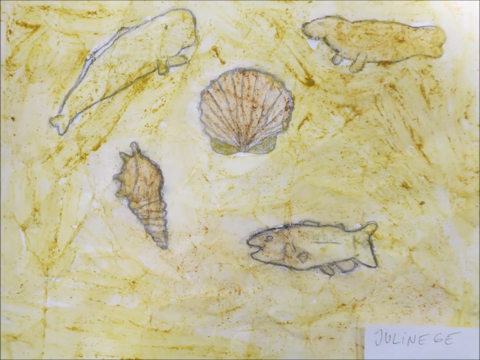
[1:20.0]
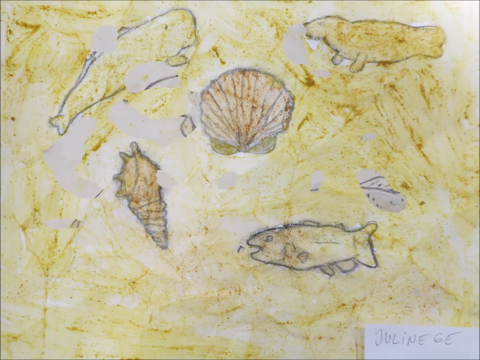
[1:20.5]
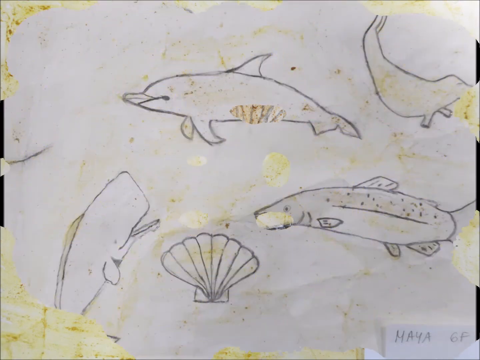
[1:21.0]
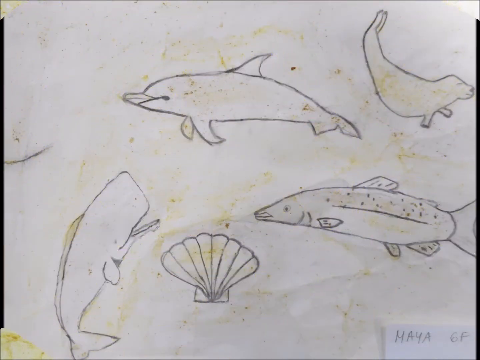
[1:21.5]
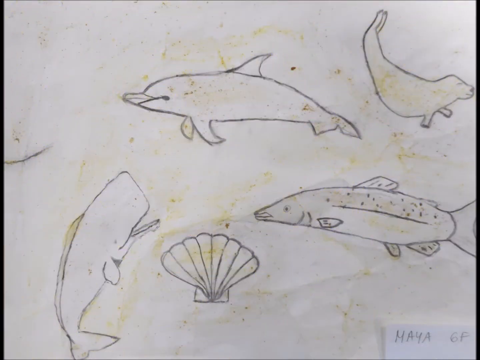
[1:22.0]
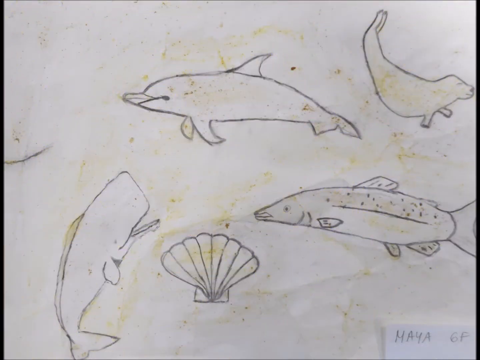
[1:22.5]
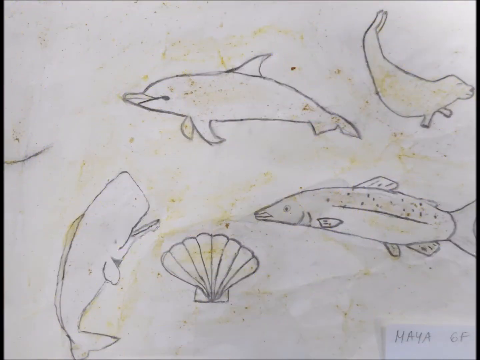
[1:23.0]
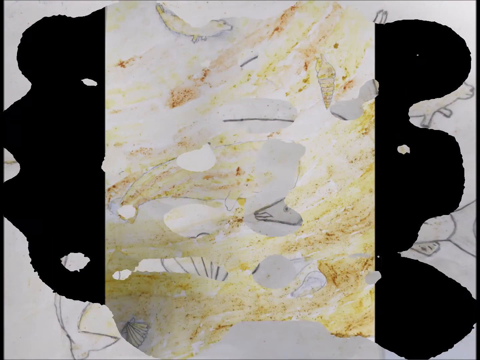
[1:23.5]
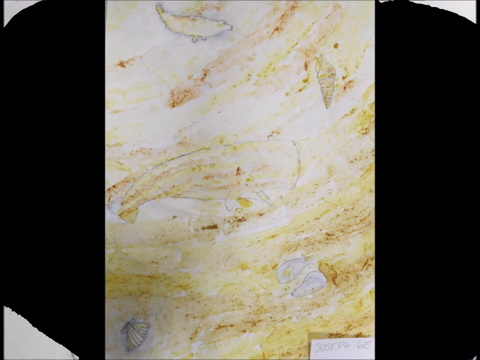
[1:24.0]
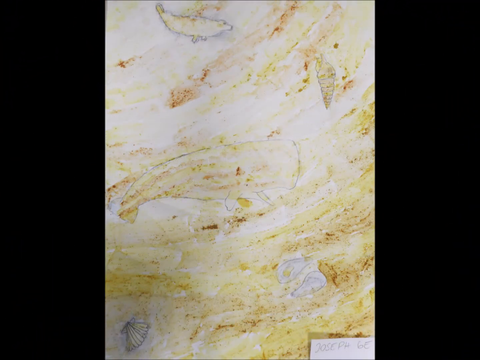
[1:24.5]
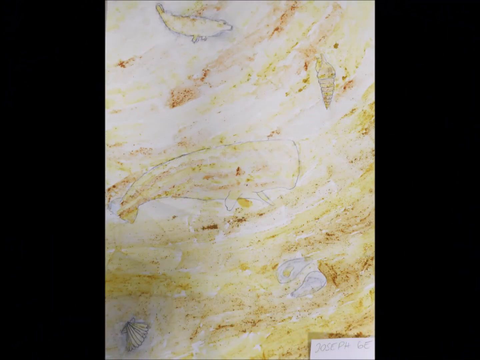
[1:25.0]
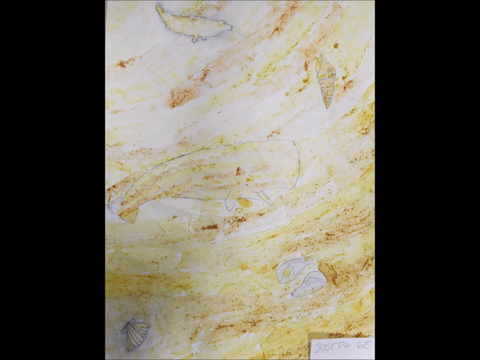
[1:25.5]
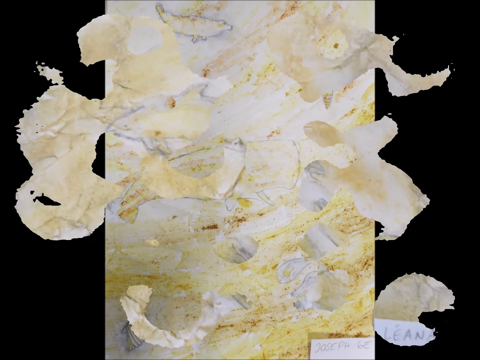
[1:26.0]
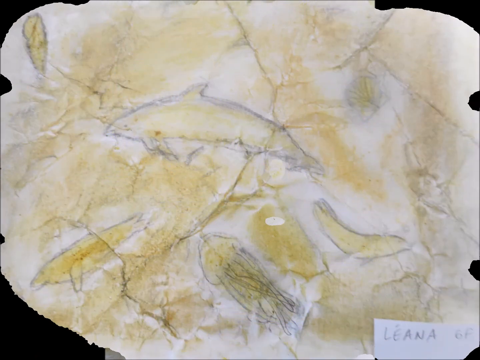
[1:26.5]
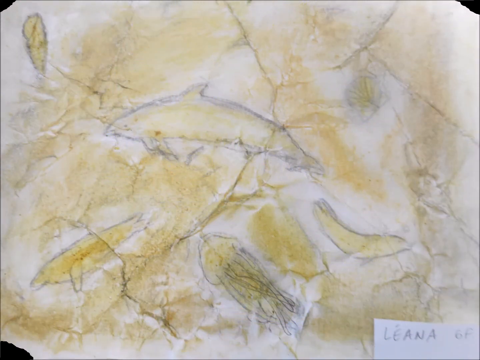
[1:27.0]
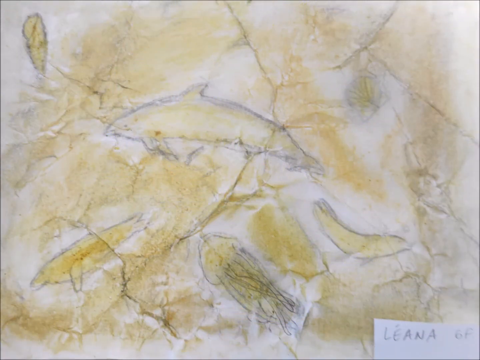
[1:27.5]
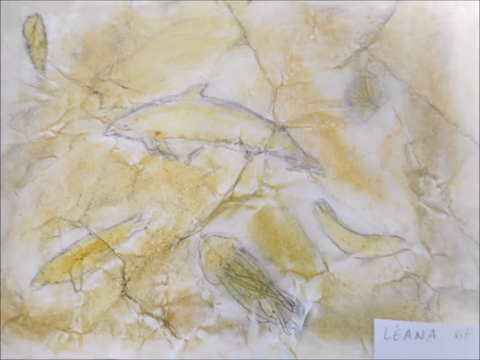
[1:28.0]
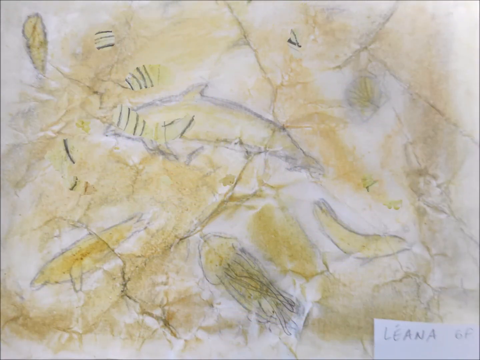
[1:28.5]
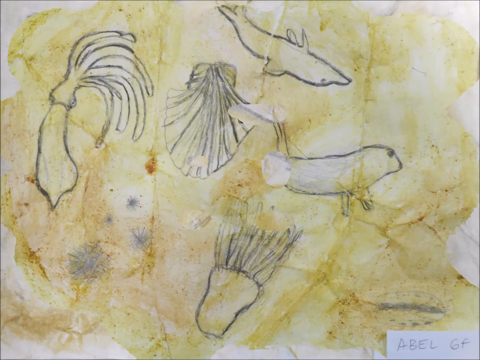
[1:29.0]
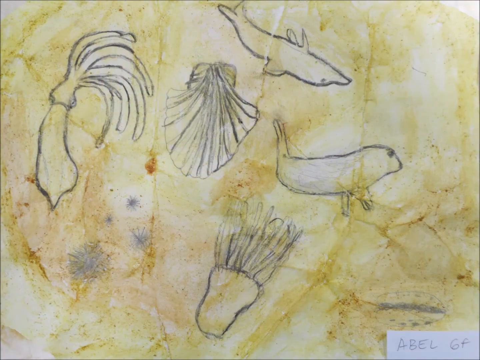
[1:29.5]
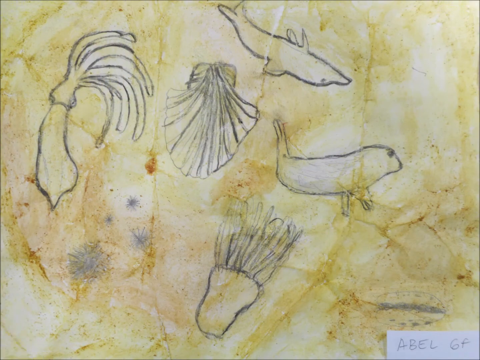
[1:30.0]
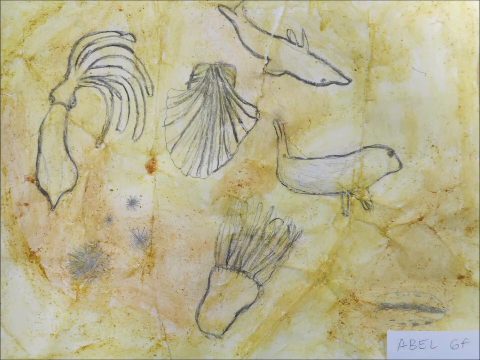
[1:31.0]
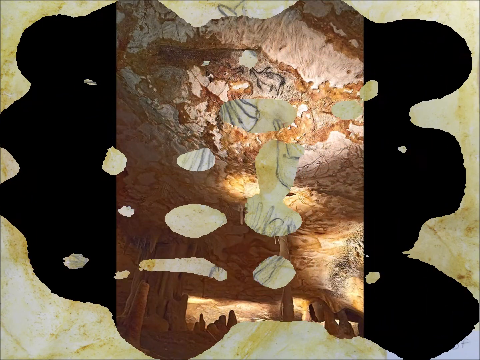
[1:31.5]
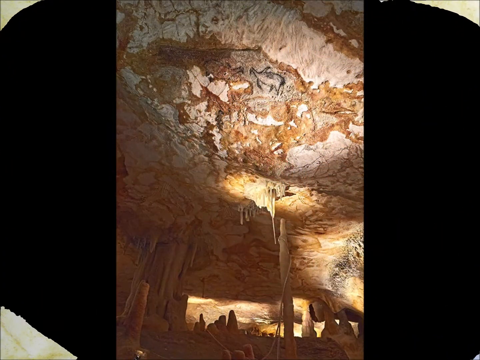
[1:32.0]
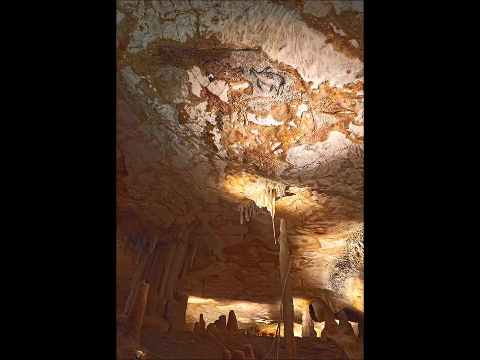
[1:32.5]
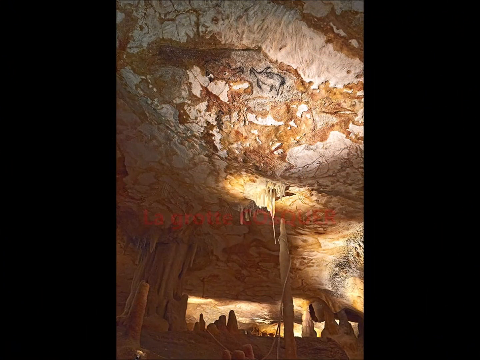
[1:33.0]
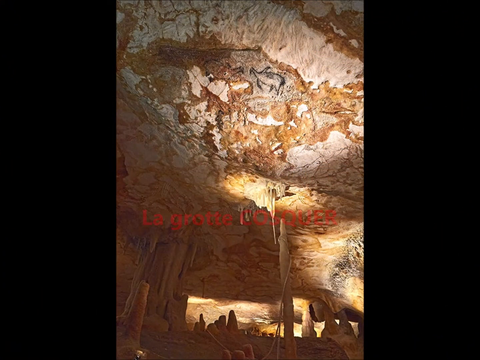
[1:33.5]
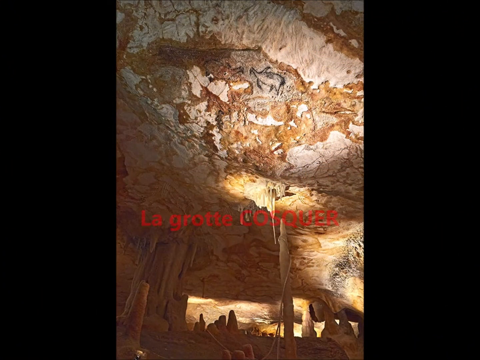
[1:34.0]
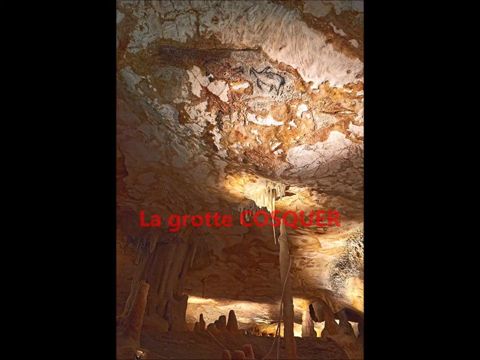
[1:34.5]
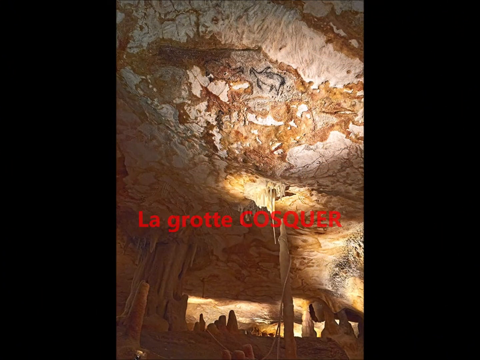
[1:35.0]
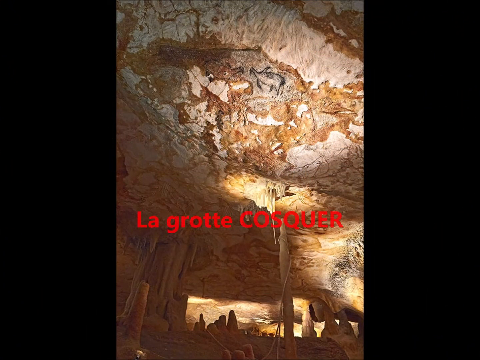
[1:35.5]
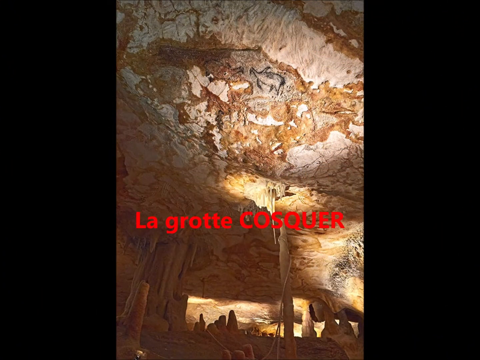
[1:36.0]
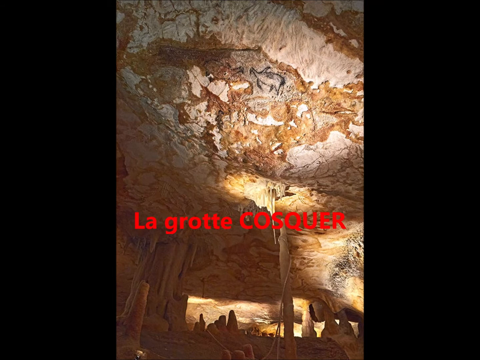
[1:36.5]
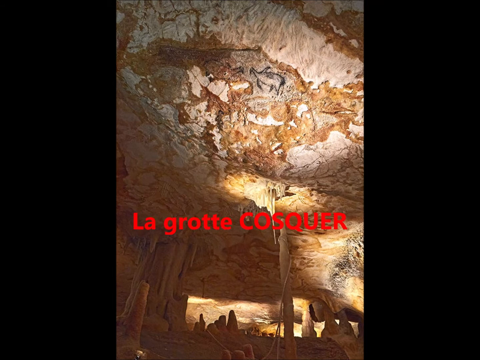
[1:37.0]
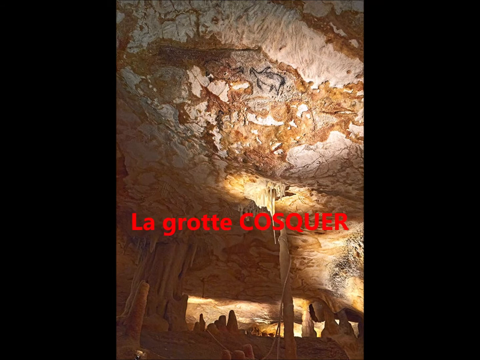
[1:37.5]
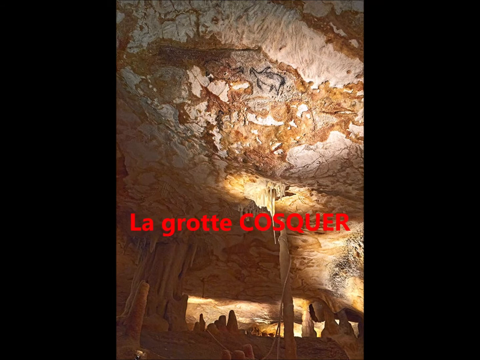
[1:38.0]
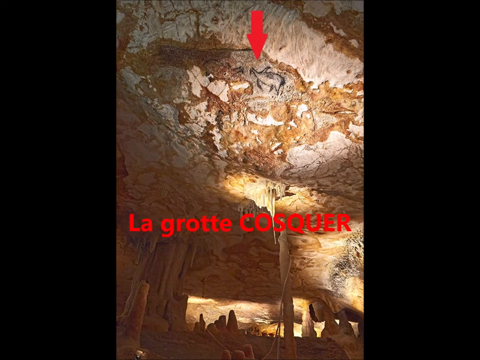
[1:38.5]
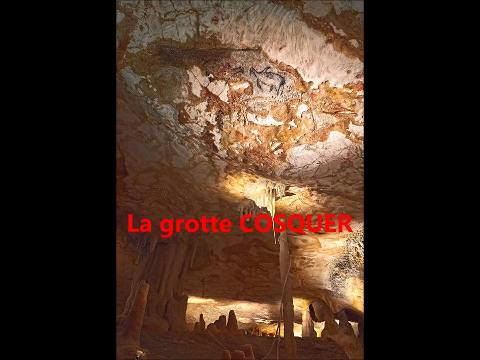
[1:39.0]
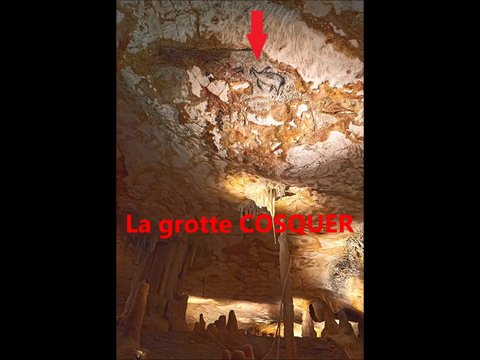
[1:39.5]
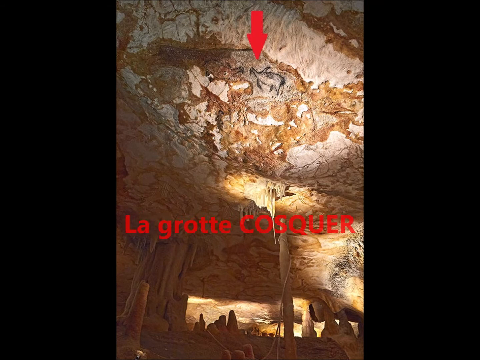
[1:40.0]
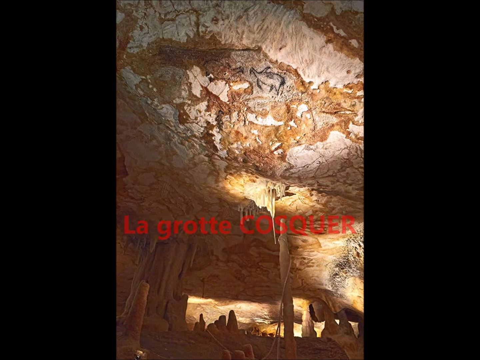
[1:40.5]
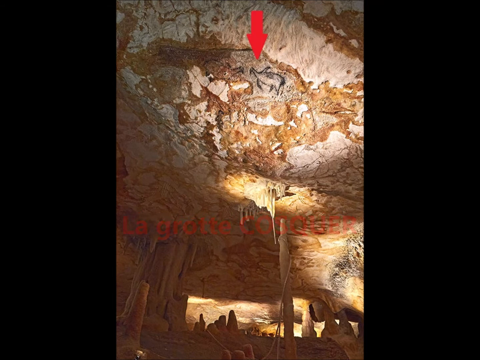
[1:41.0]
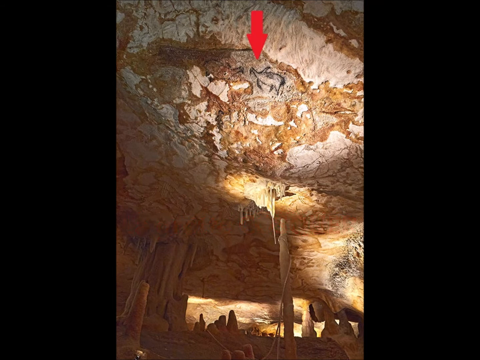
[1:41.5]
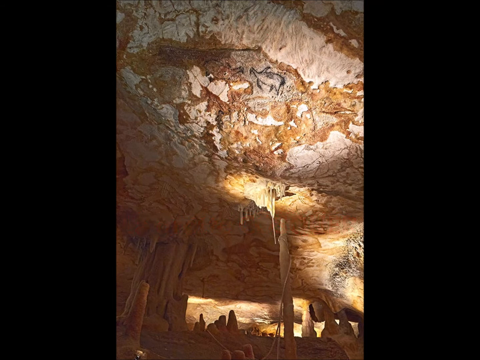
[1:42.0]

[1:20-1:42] More children's drawings of marine life in pencil with colors appear. The first shows a shrimp, a shellfish, a fish, a seal, and a whale, signed in the bottom right-hand corner. The next shows a whale, a dolphin, a seal, other fish, and a starfish. Another shows a whale, a shark, a squid, a jellyfish, and an oyster, done in pencil with yellow and brown coloring. Each drawing is signed in the lower right-hand corner.